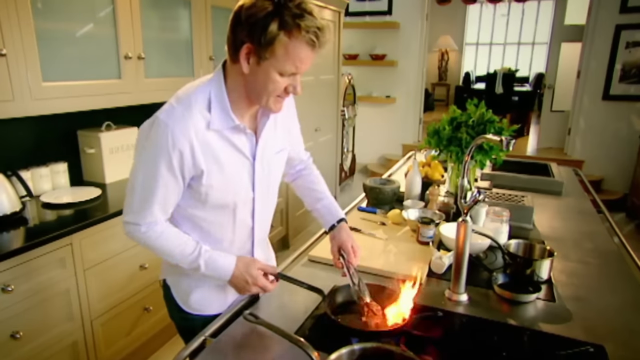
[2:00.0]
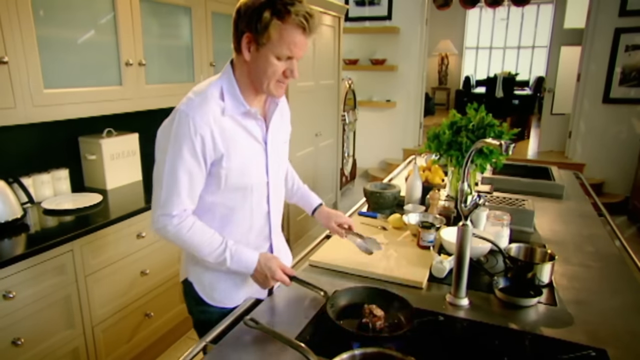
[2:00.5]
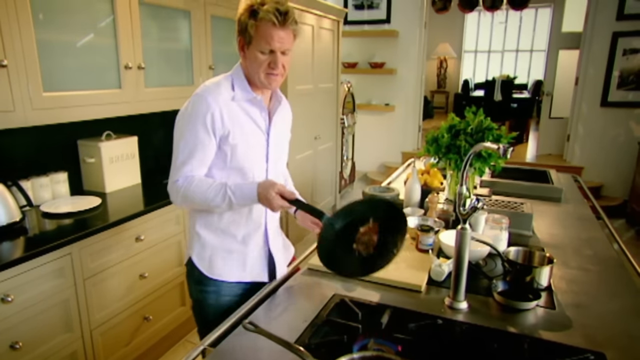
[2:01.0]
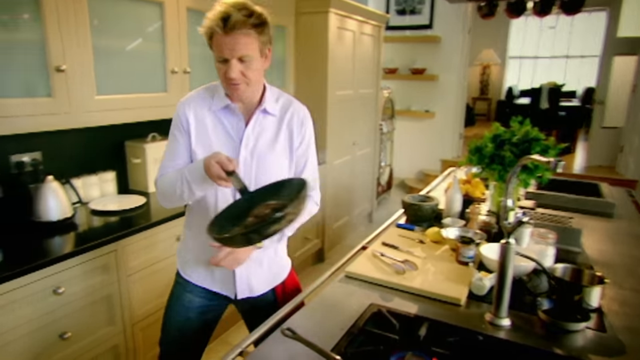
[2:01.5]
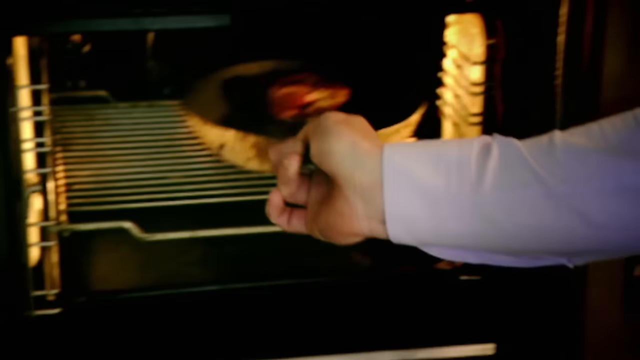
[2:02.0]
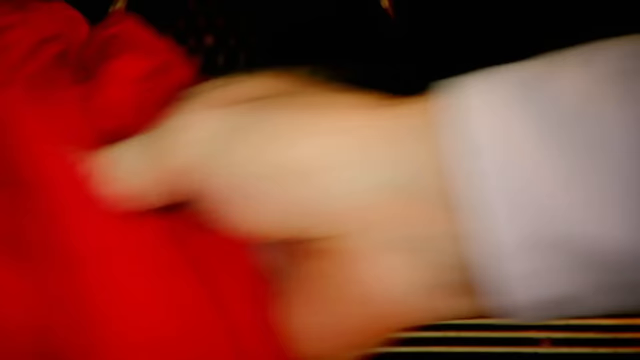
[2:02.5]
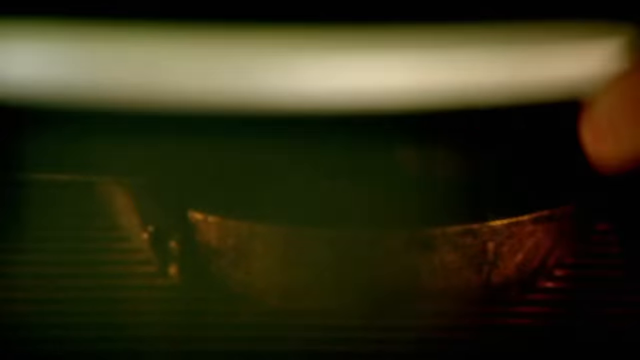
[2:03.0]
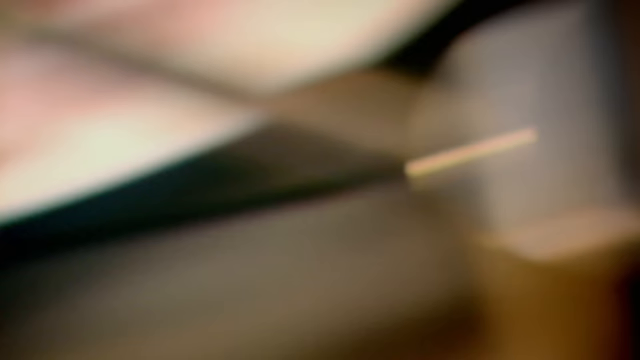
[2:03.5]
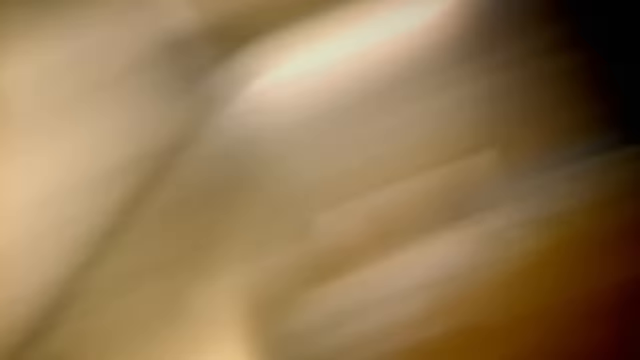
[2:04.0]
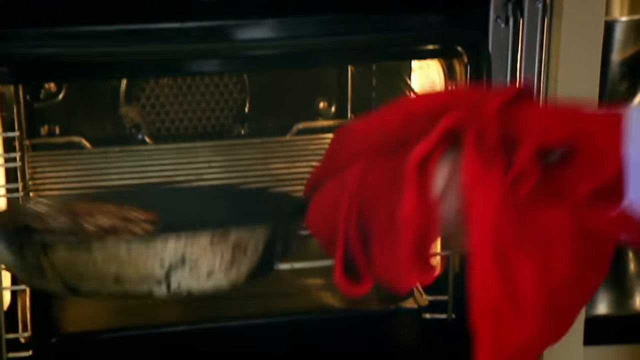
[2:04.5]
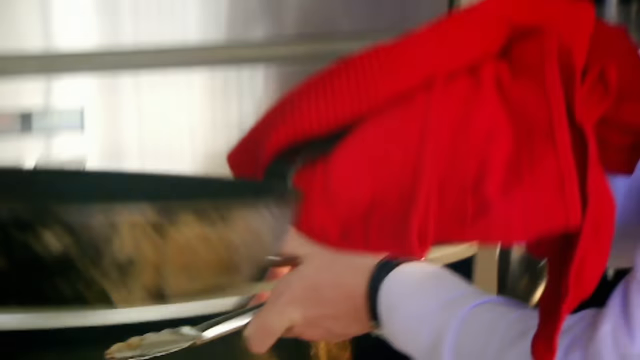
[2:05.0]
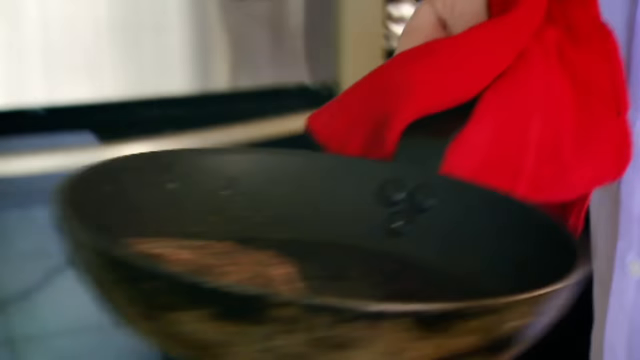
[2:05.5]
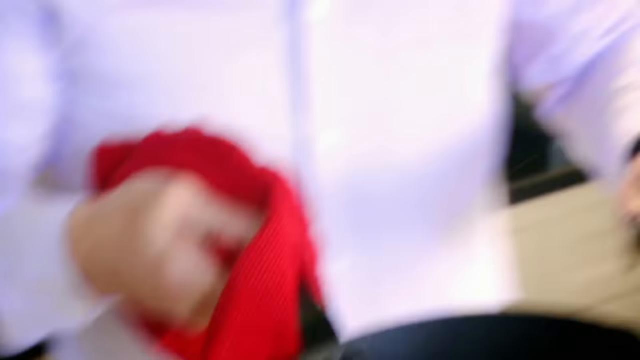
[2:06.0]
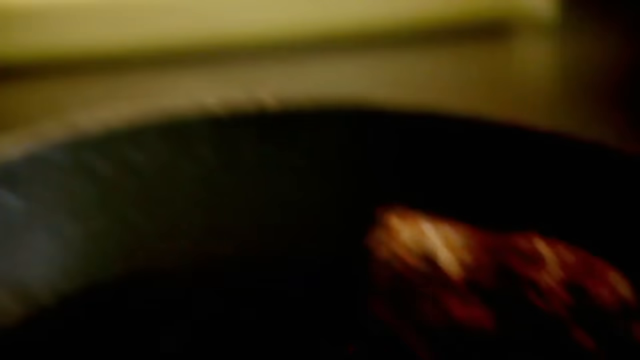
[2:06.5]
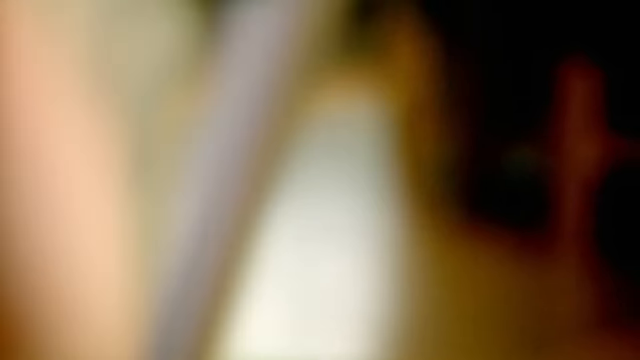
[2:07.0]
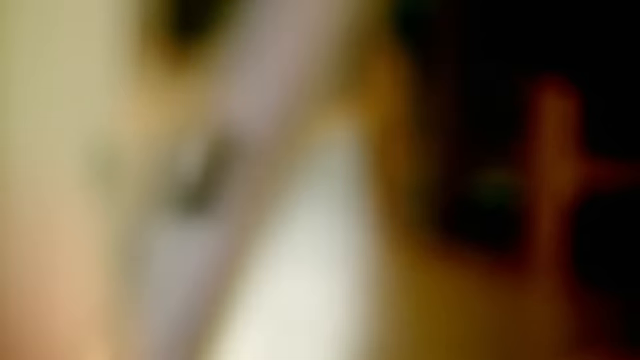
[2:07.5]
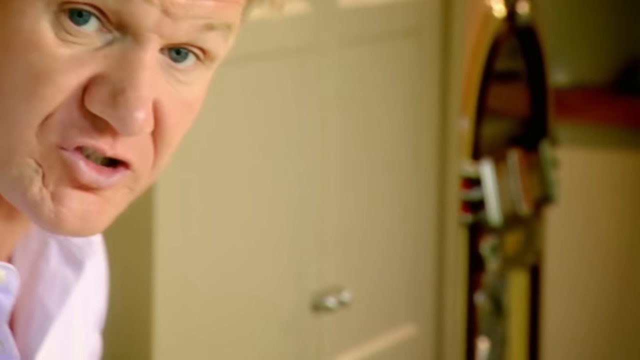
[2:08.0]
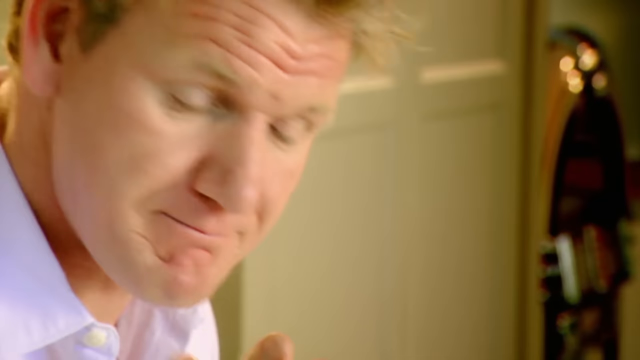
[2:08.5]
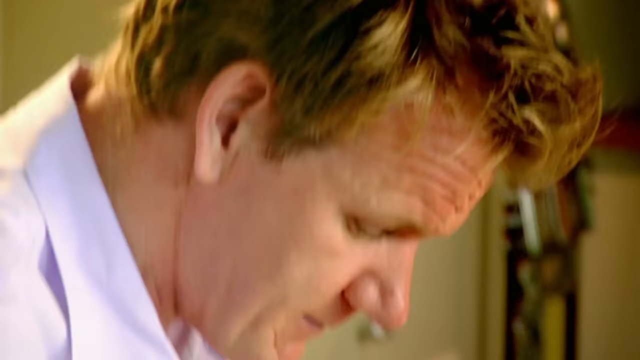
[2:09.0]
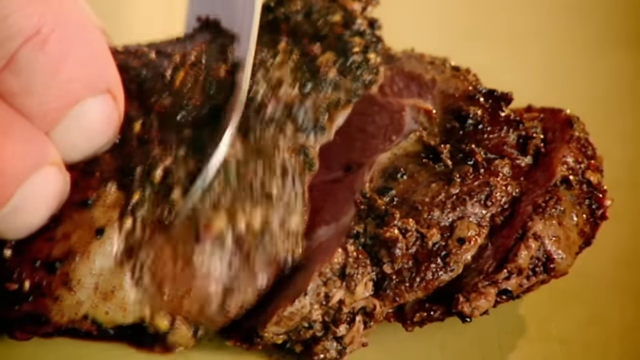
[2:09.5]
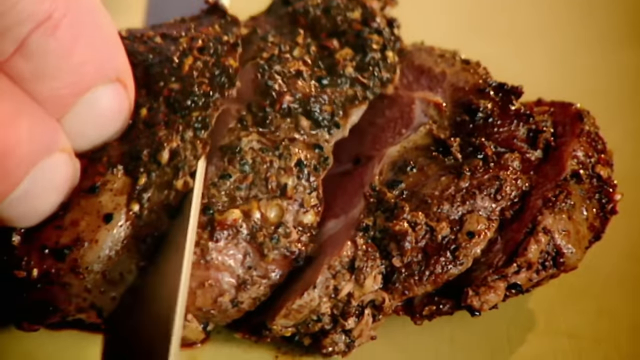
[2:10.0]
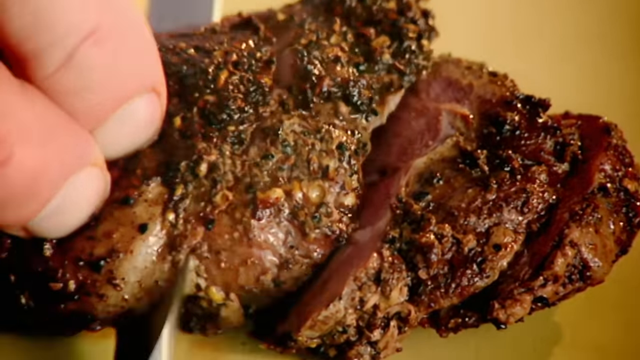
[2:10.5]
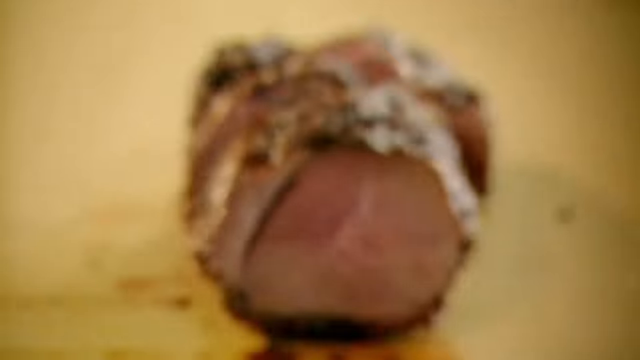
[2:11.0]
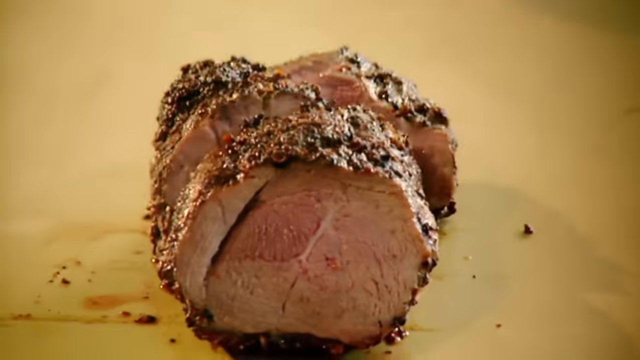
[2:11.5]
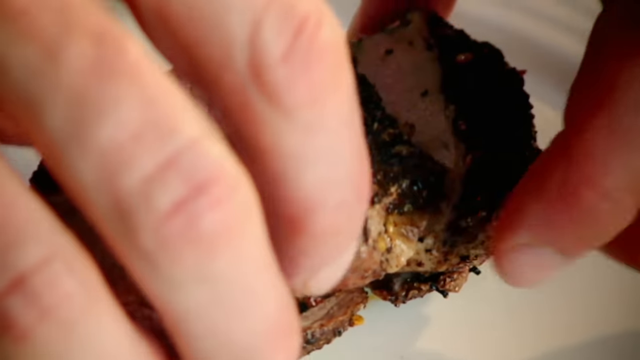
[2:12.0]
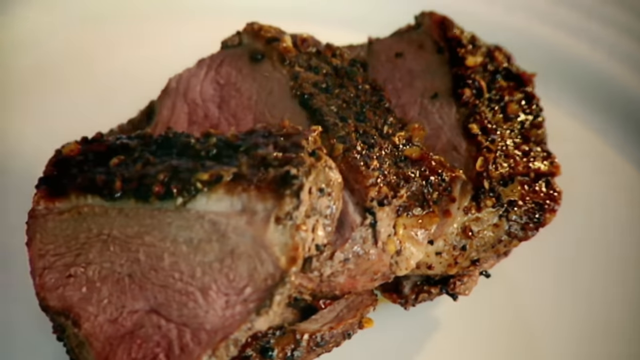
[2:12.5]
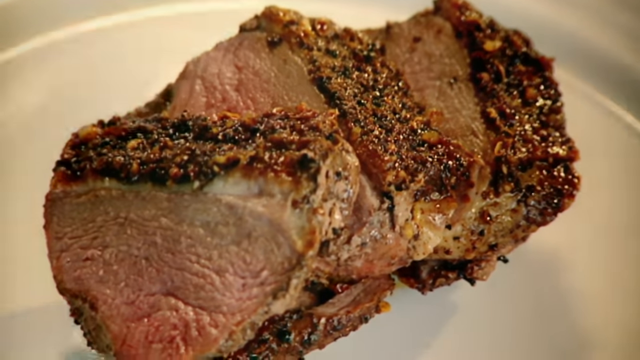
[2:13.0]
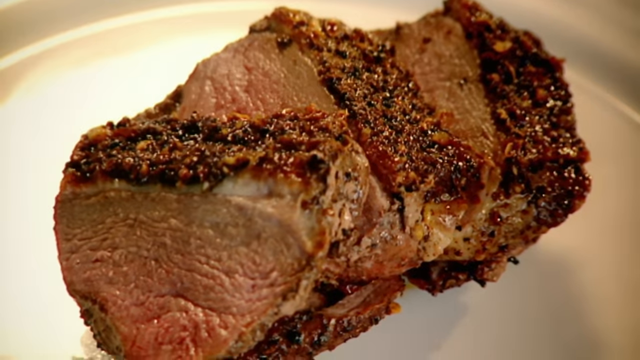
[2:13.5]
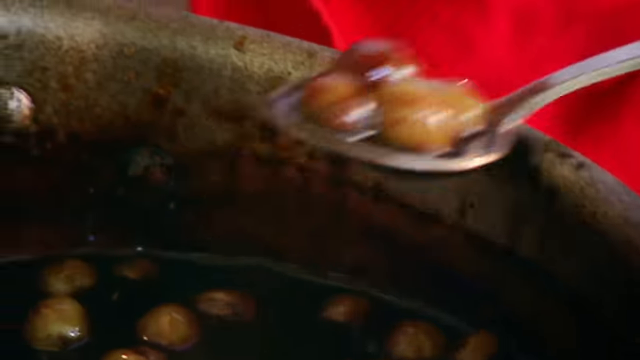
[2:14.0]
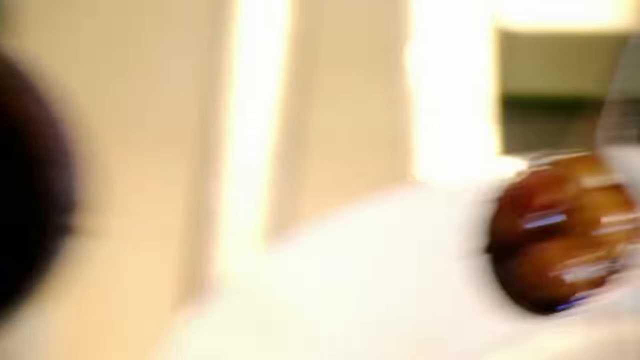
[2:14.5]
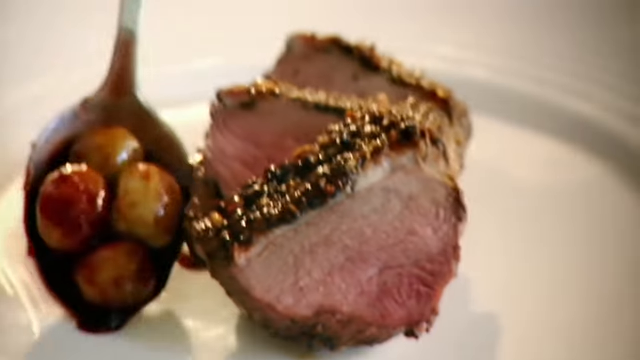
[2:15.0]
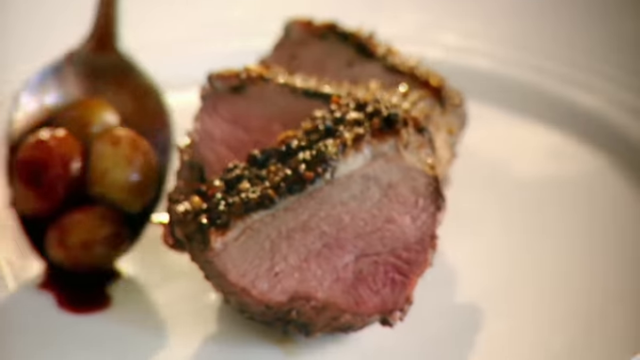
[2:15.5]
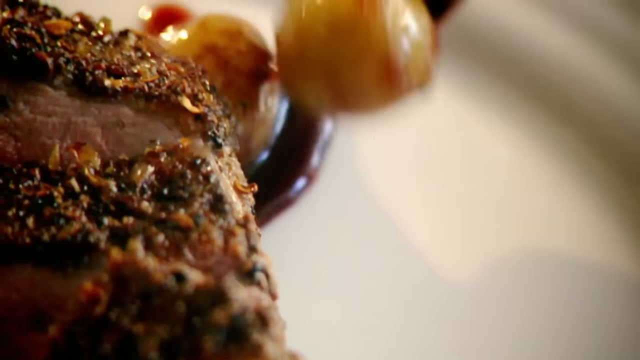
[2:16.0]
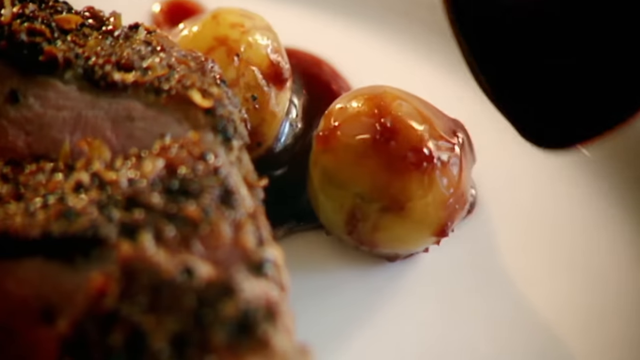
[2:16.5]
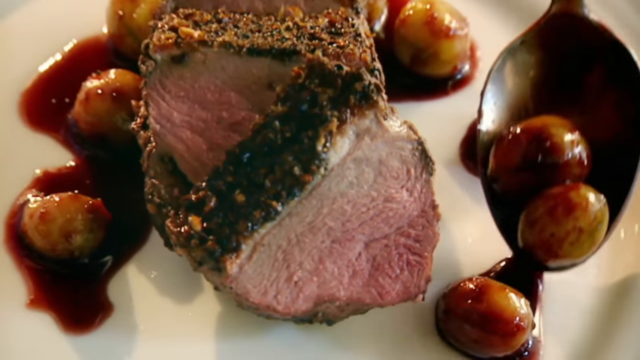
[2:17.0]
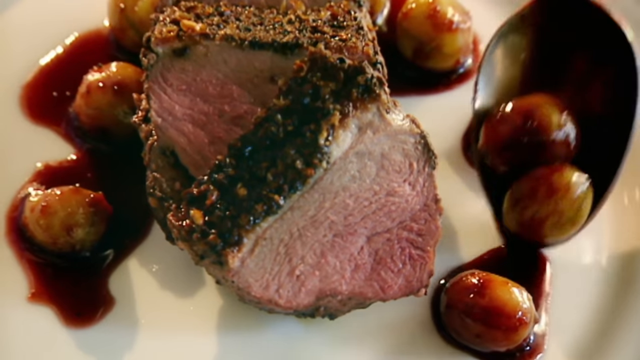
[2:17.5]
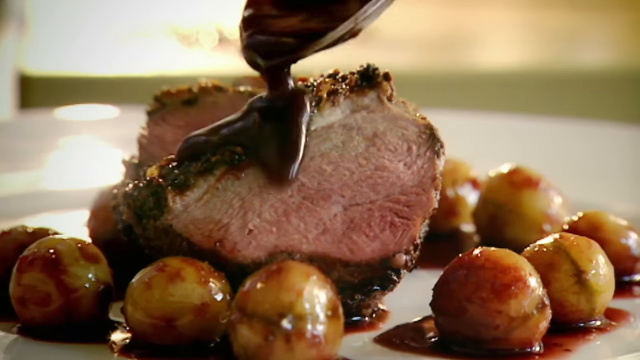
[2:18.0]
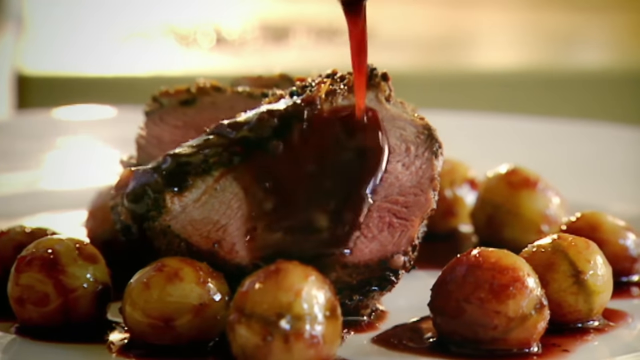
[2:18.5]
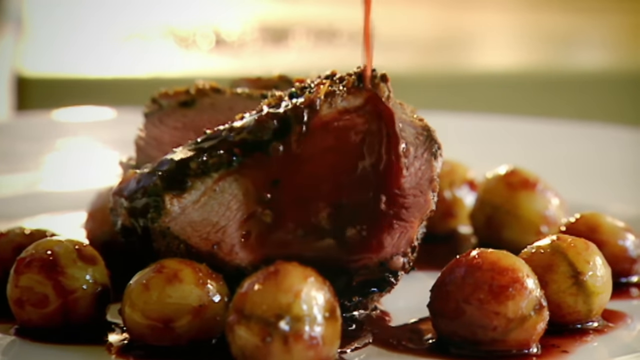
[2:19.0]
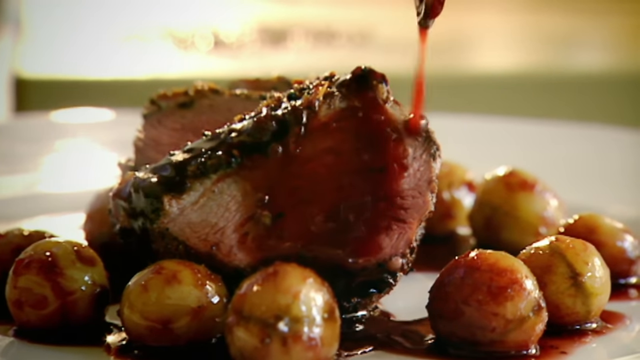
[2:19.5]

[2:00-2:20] The man turns the grape mixture again and places the pan with the steak on the stove. He then puts the pan with the steak into a black oven with a silver tray inside. Later he takes the pan out using the same red cloth he used to turn the pot on the stove. He places the steak on a table and gently cuts through it, making small equal pieces, then pours the grape mixture onto and around the steak. The steak looks well done inside and still juicy. The camera shows a dining table from afar, with a black table and black chairs.